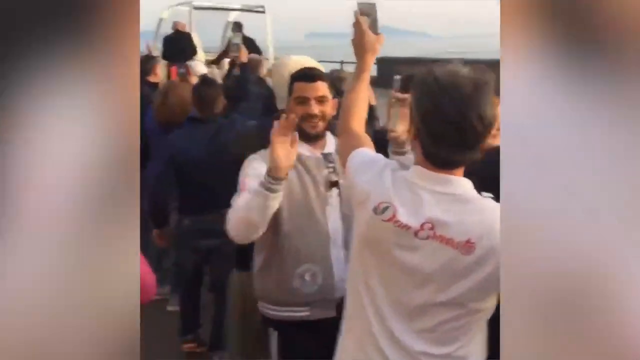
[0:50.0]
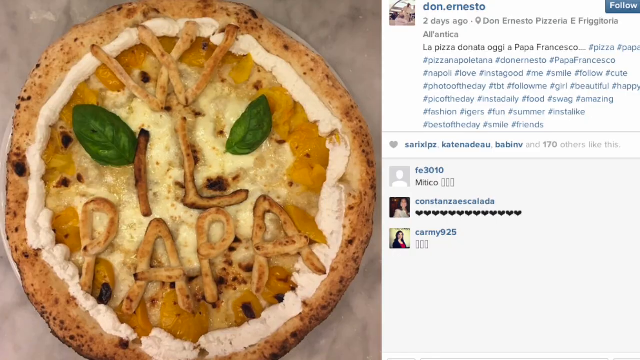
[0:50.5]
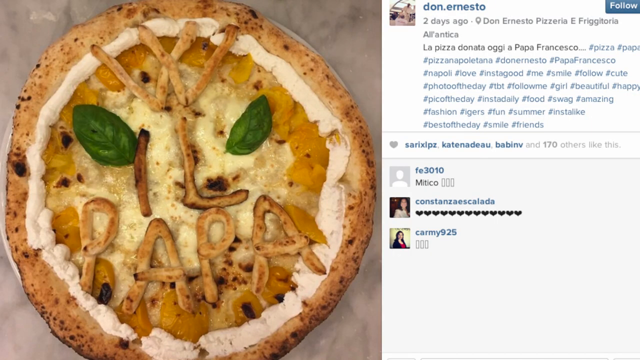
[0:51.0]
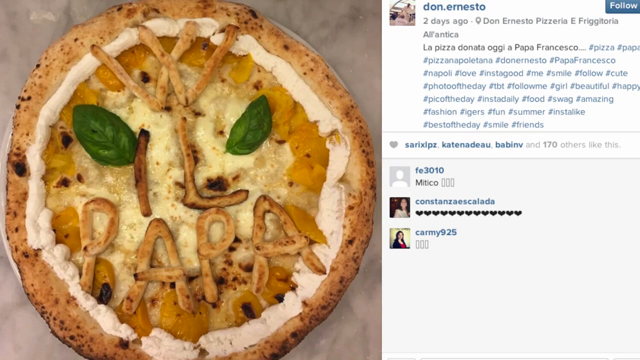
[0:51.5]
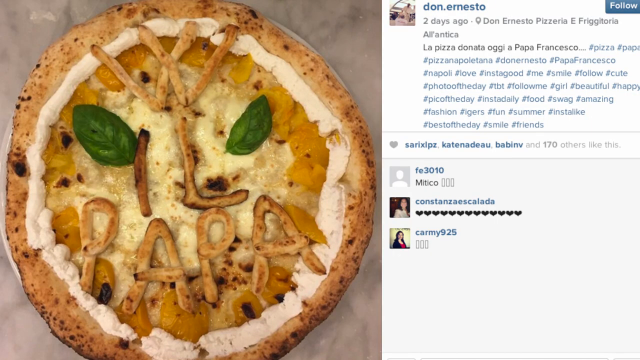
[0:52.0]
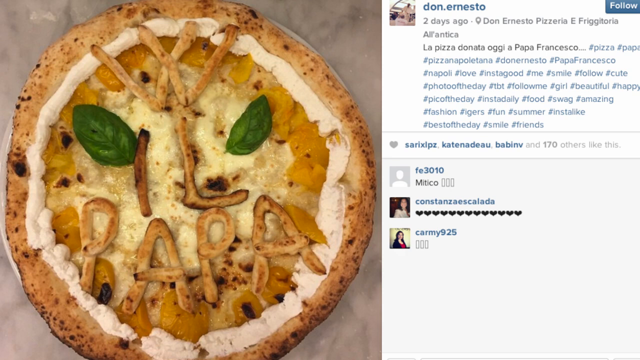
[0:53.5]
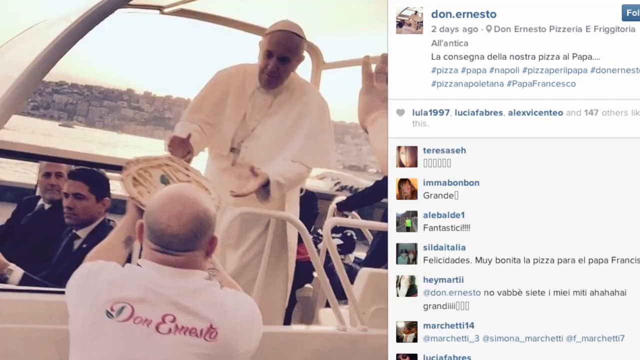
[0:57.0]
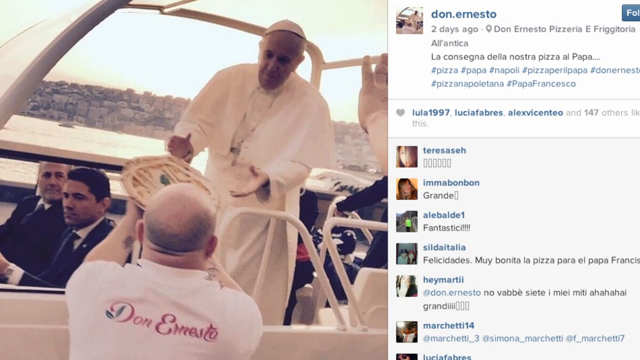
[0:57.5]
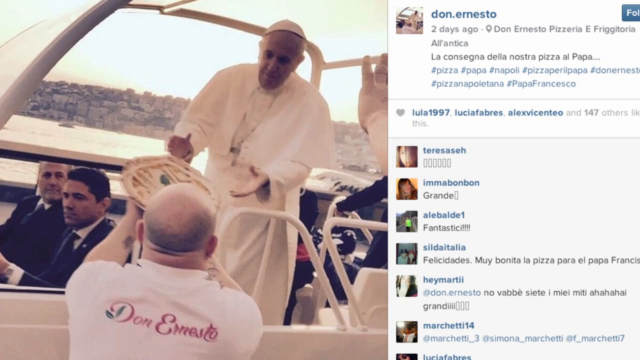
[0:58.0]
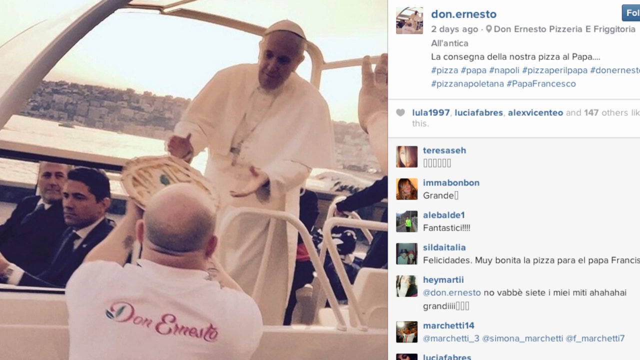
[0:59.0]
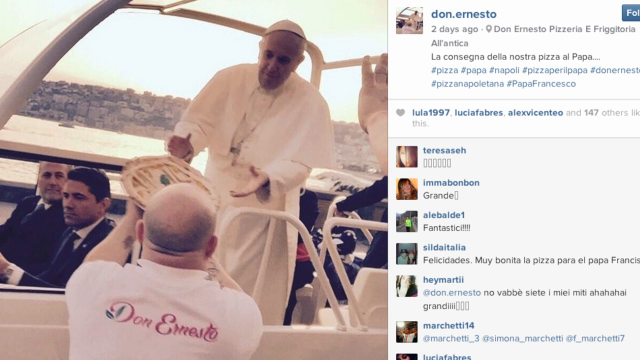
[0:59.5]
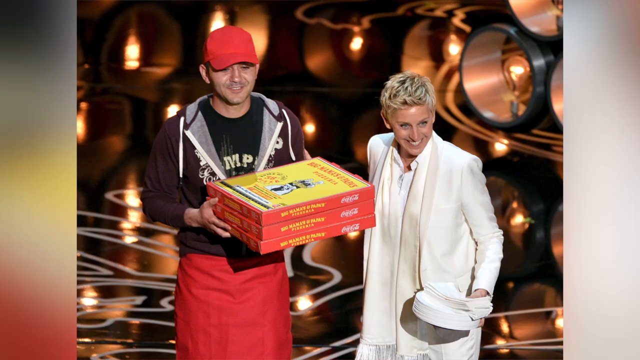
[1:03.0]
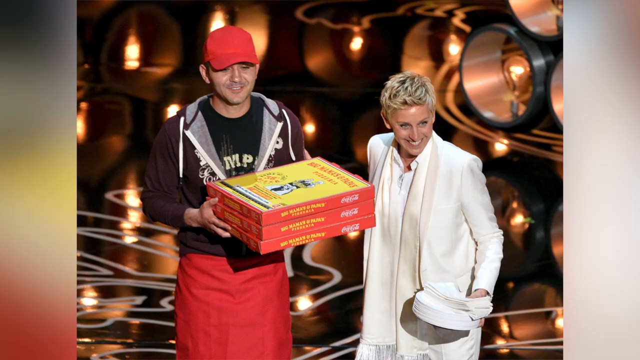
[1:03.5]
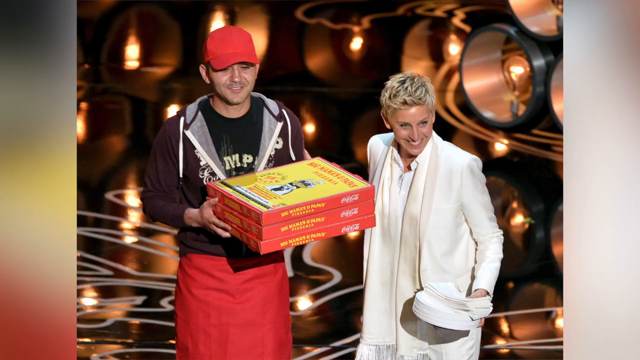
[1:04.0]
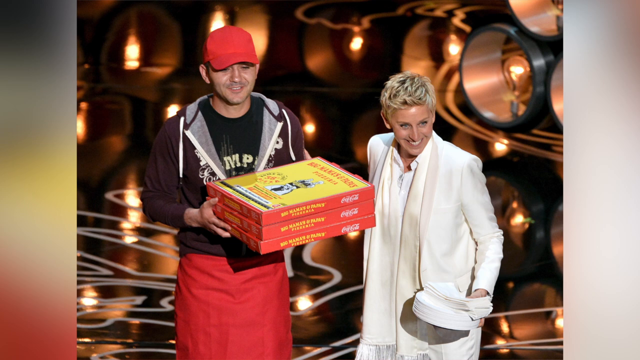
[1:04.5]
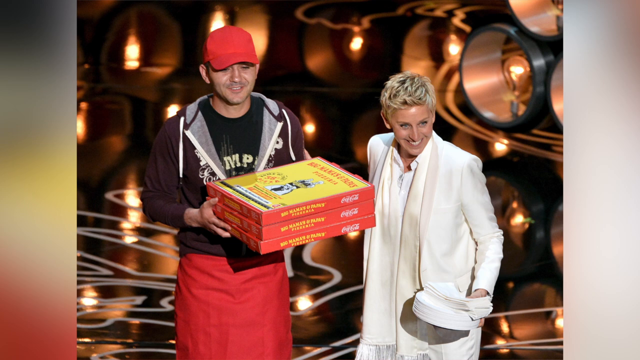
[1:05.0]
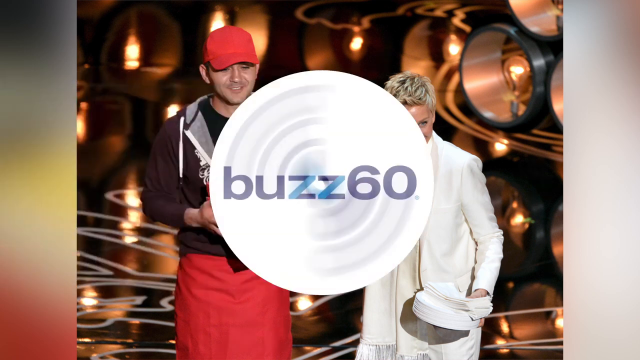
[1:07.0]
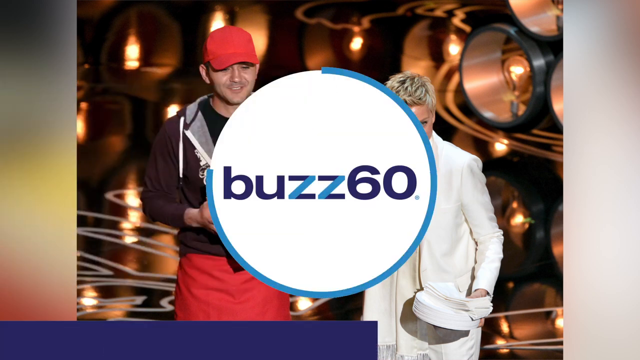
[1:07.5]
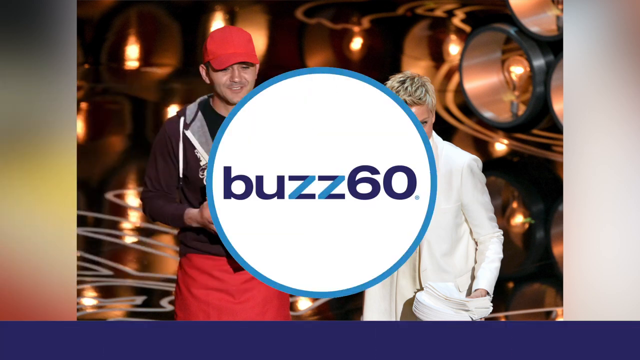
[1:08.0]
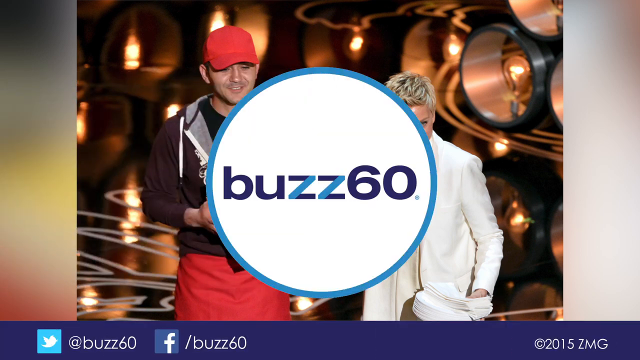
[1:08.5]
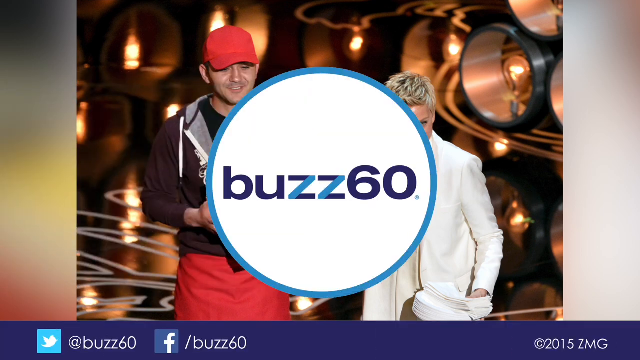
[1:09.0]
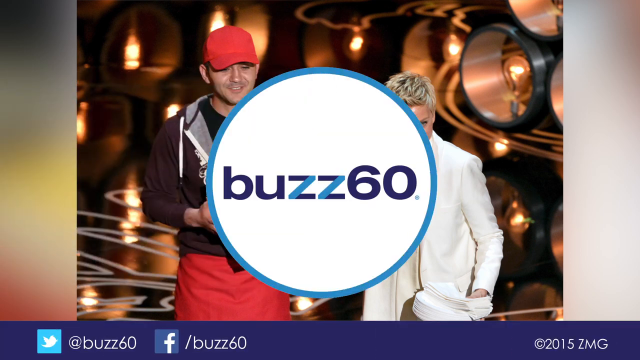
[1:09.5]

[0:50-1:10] Video of Pope Francis passing by in the Mercedes is placed in the same panel as another post, which shows the pizza that was given to the Pope by a person standing outside on the road, with people commenting about the pizza. The picture of the pizza being handed to the Pope is shown again. In a different scene, a pizza man is in a studio with a female wearing white clothes; he carries three boxes of pizza. The pizza man and the female are in the same picture, both taking a picture. The pizza man wears a red cap and has dark, black hair.